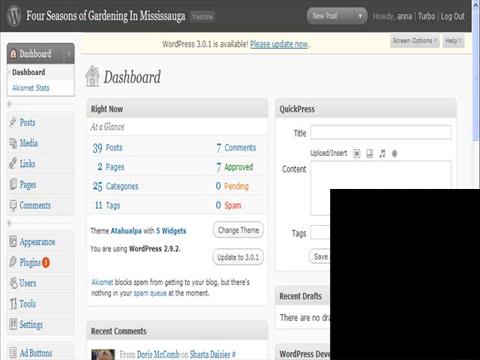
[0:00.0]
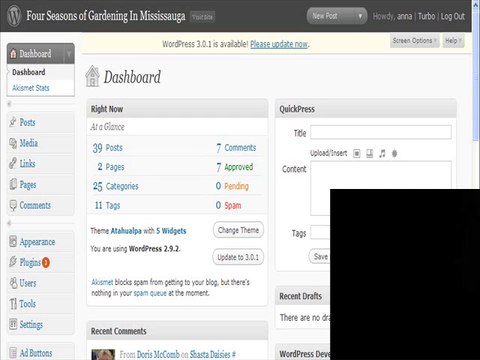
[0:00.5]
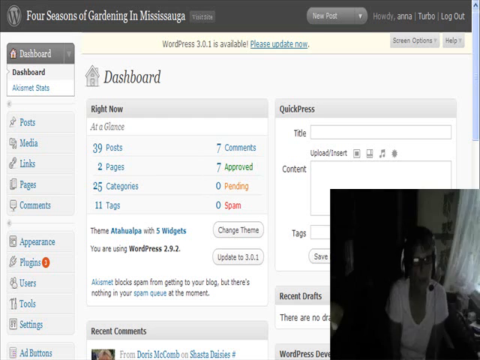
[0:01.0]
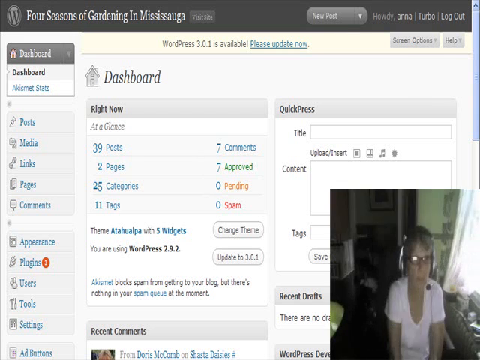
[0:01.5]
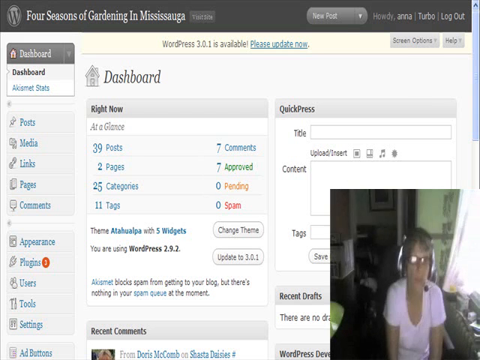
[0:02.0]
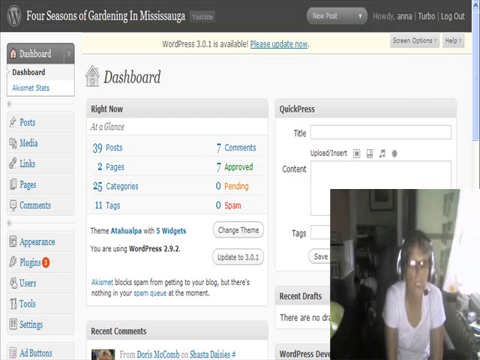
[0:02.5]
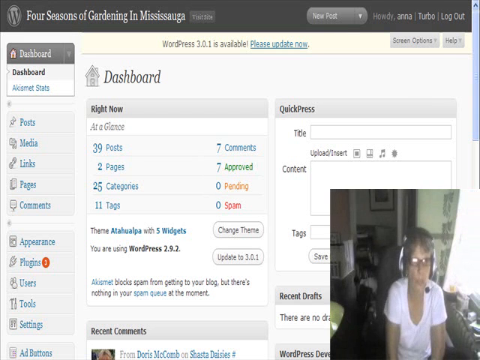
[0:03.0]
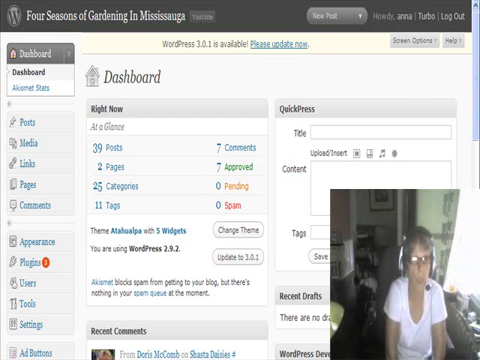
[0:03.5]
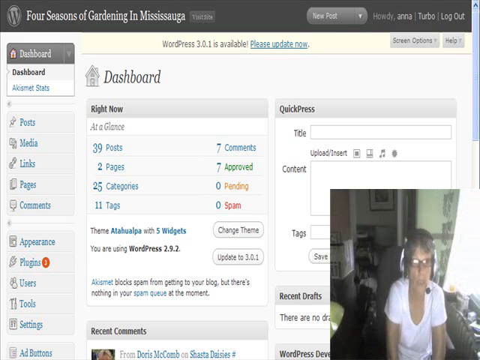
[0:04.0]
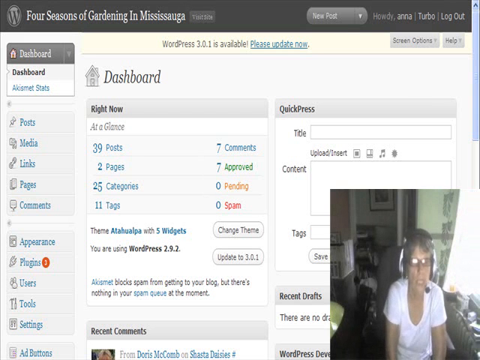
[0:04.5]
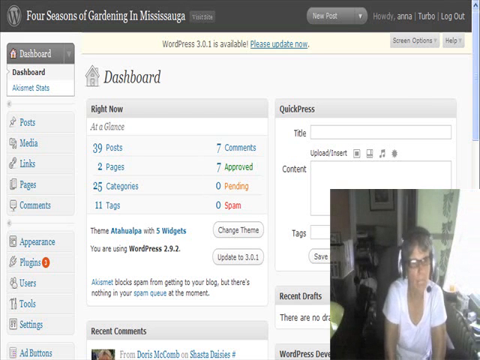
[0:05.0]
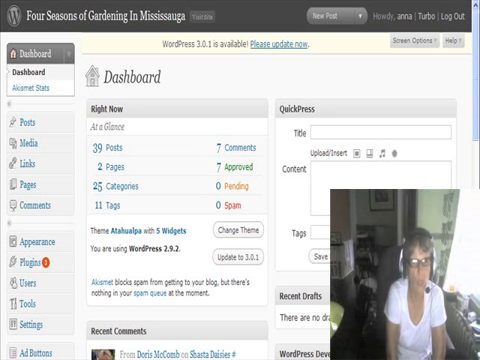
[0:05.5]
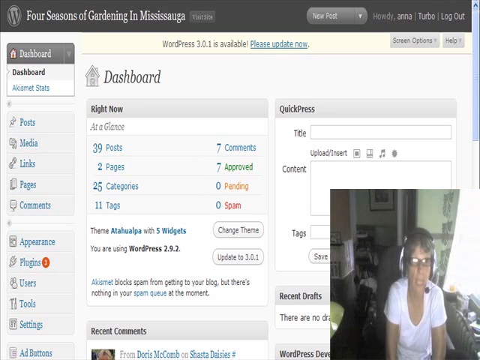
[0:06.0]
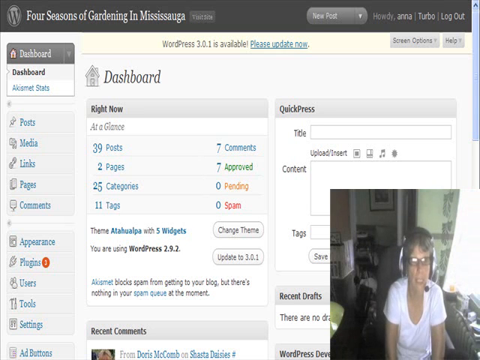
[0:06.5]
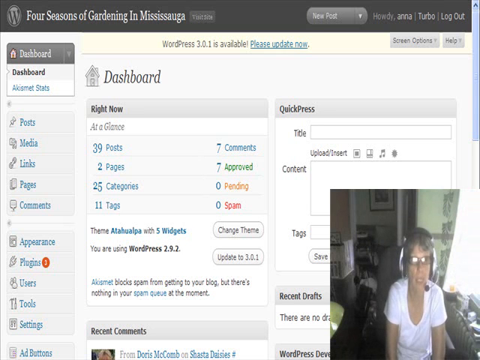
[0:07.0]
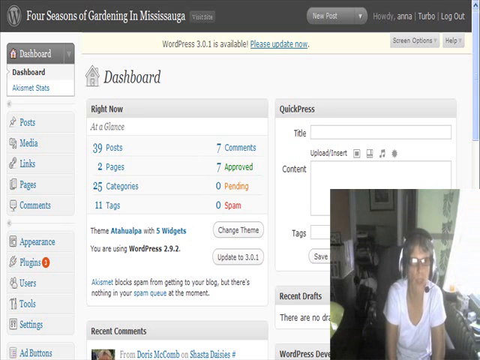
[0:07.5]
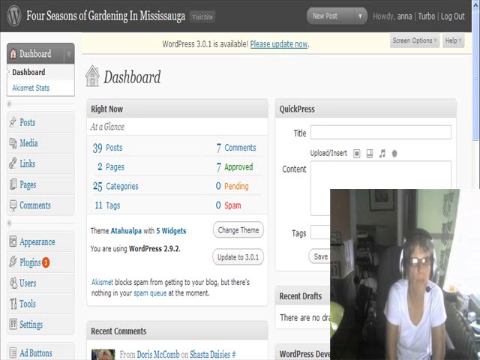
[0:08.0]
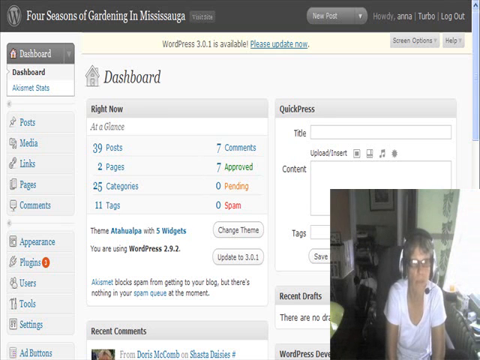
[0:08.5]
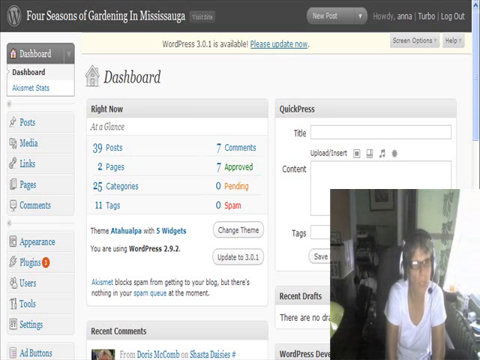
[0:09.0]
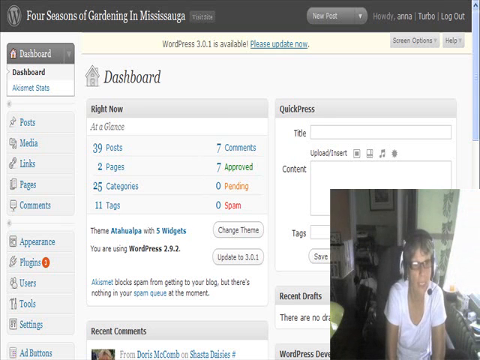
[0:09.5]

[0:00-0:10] This appears to be some sort of instructional or informative video. A dark gray border runs across the top of the screen, with white lettering that reads "Four Seasons of Gardening in Mississauga." In front of the title is what appears to be a logo: an oval shape, taller than it is wide, white in the middle with a black W over it. To the right is a small selection button with a white, downward-pointing arrow that says "new post," and next to that are more options, apparently "Turbo" and "Logout"; the rest is unreadable, but all of this writing is white. Below is a screen that starts with "dashboard," preceded by a house logo. A menu is on the left-hand side and a main screen on the right, and the dashboard lists several other items. In the bottom right is a window in which the woman presenting appears. She is probably somewhere around 50 to 60, with short gray hair, glasses, a white t-shirt and white headphones, and she is speaking.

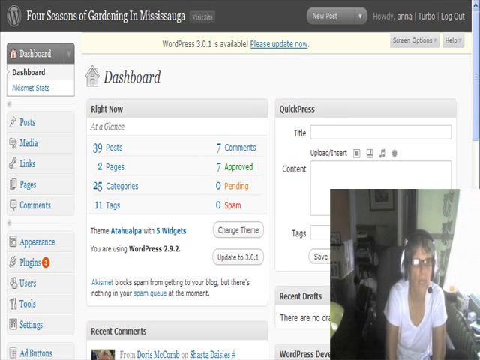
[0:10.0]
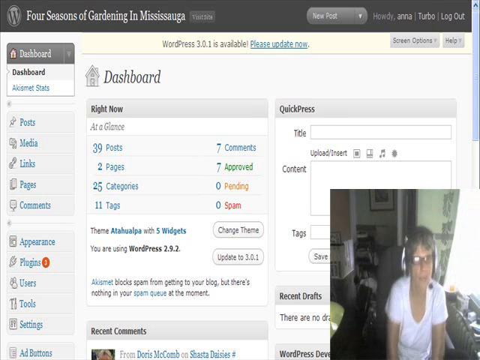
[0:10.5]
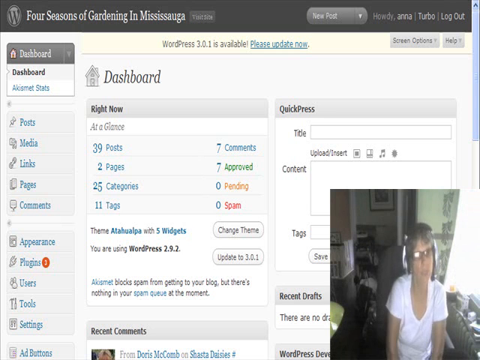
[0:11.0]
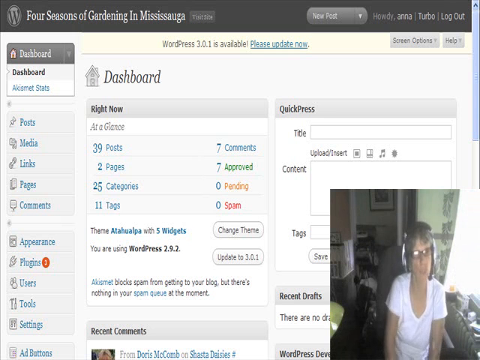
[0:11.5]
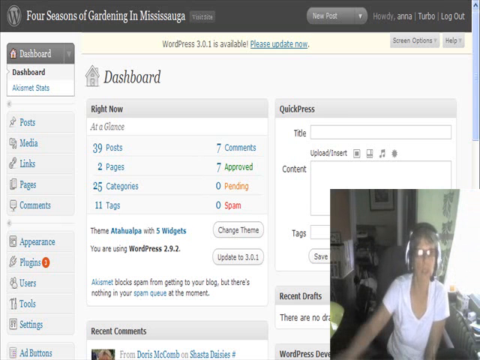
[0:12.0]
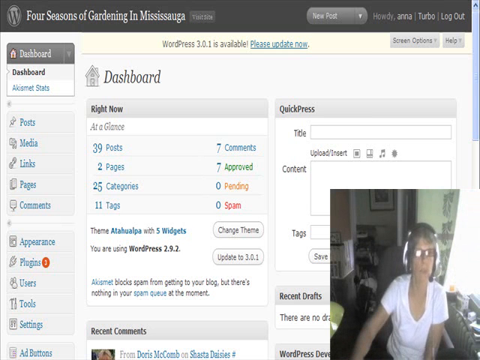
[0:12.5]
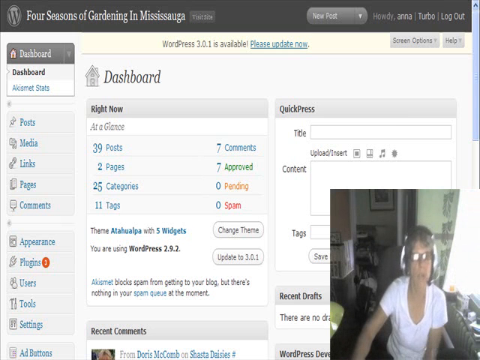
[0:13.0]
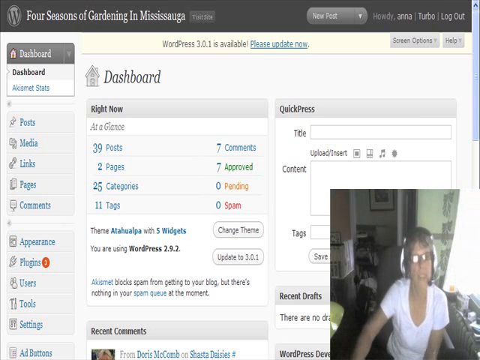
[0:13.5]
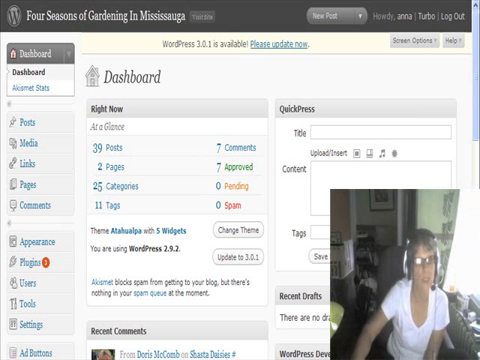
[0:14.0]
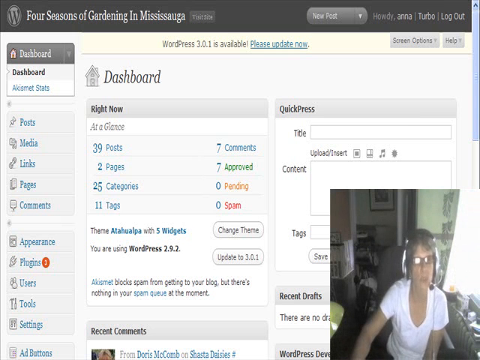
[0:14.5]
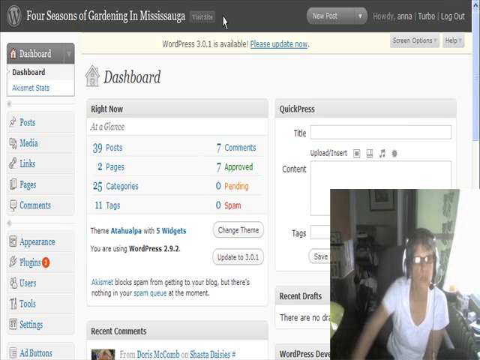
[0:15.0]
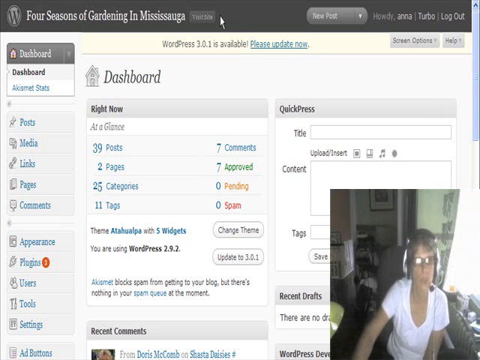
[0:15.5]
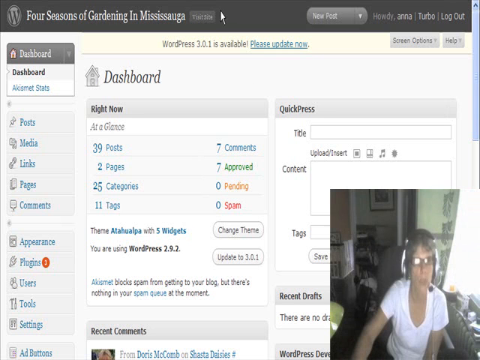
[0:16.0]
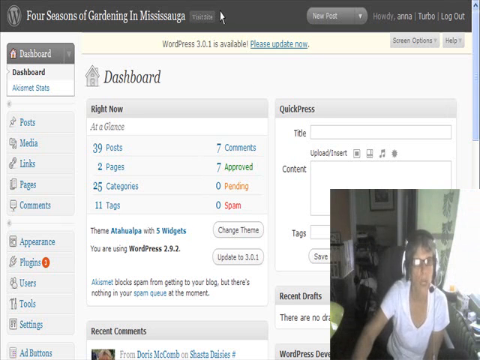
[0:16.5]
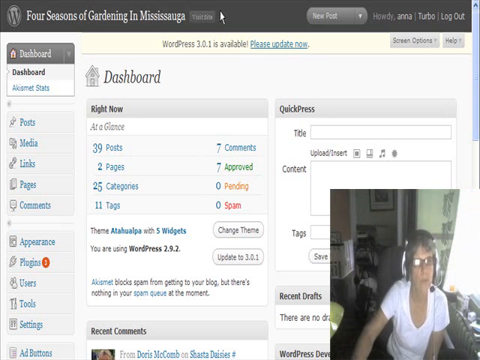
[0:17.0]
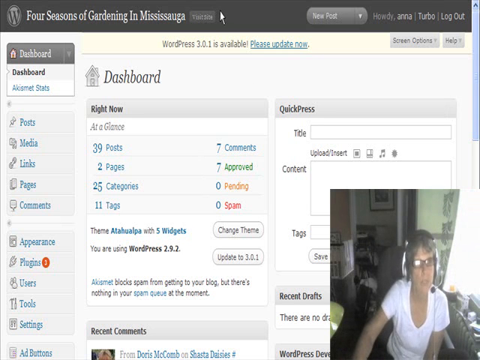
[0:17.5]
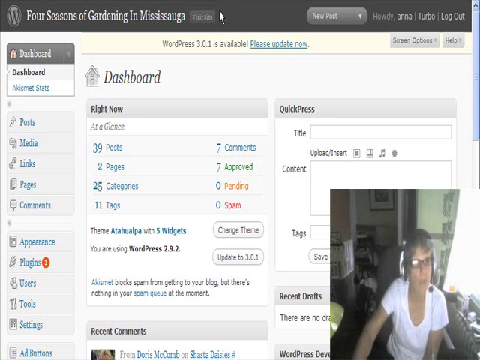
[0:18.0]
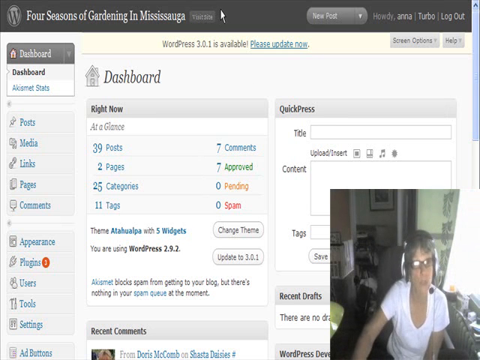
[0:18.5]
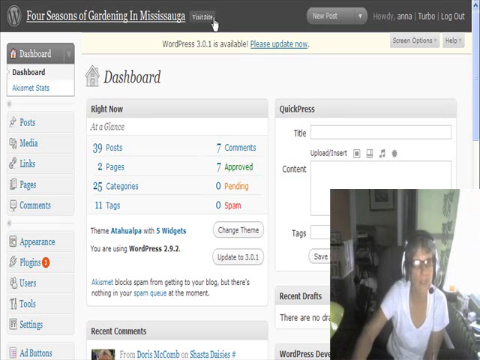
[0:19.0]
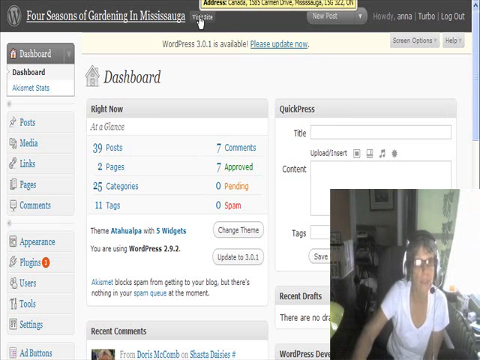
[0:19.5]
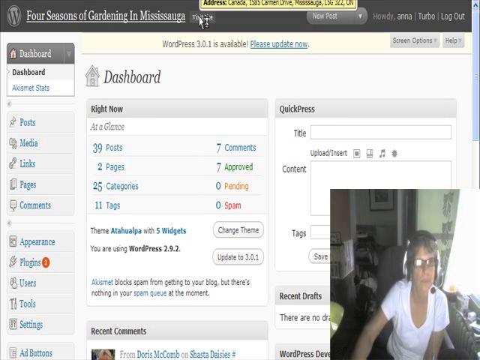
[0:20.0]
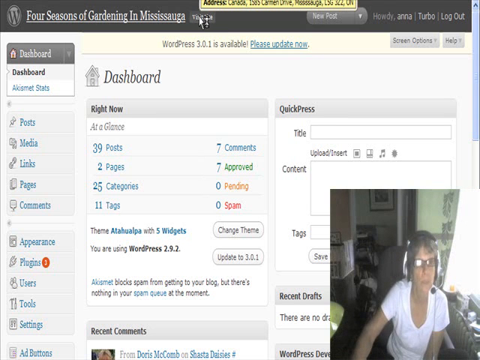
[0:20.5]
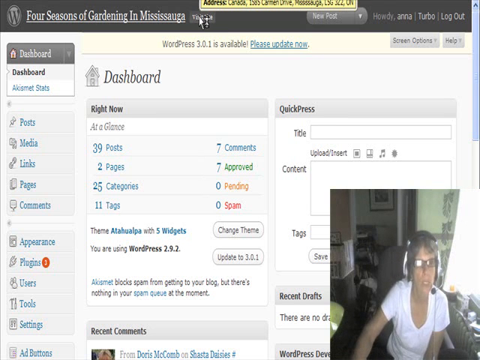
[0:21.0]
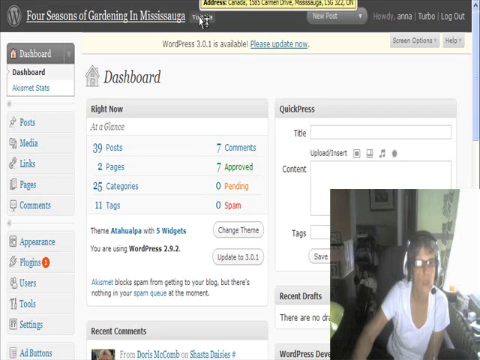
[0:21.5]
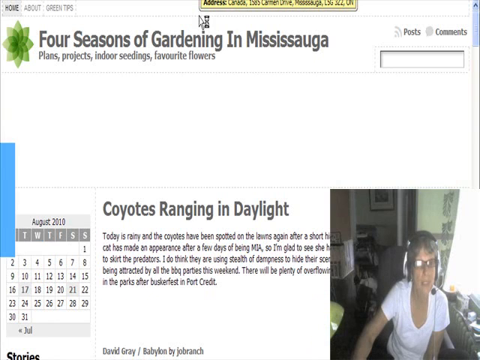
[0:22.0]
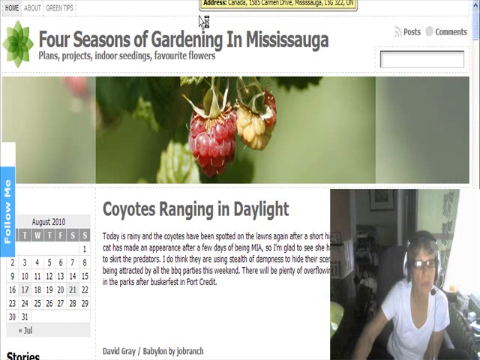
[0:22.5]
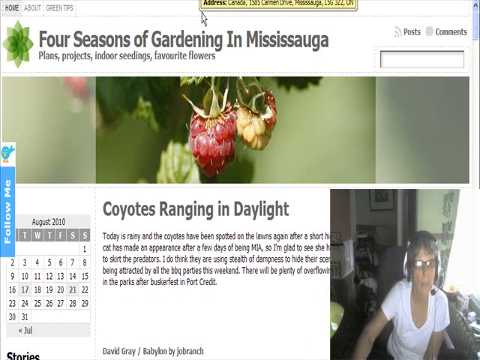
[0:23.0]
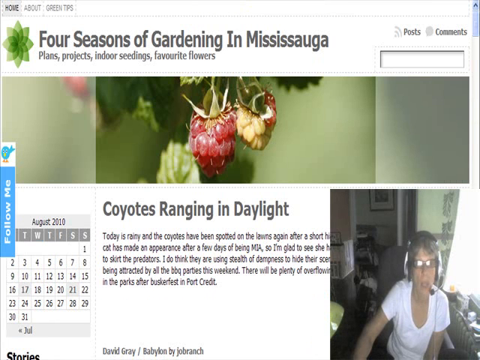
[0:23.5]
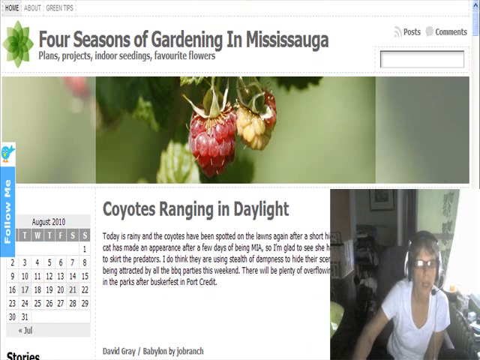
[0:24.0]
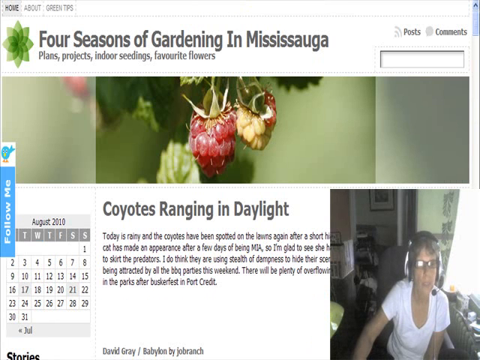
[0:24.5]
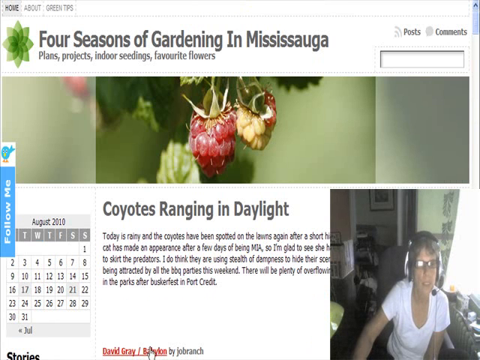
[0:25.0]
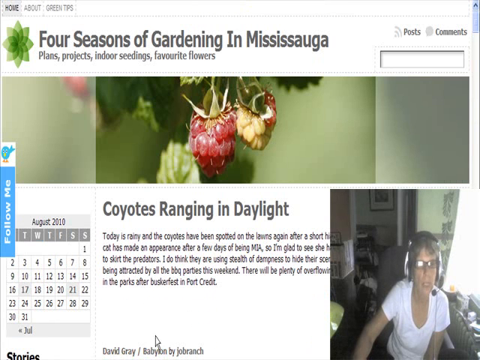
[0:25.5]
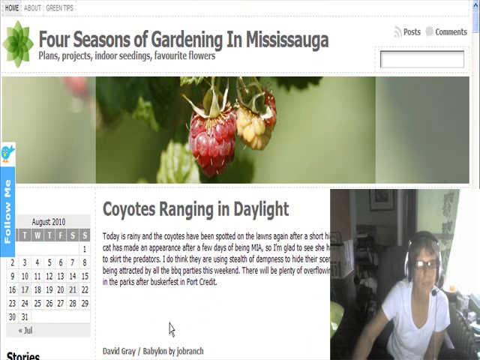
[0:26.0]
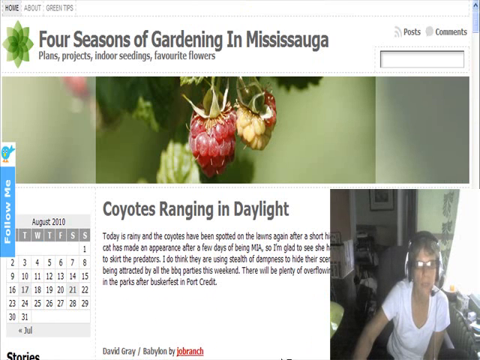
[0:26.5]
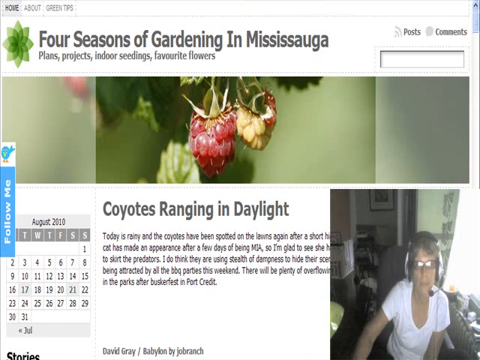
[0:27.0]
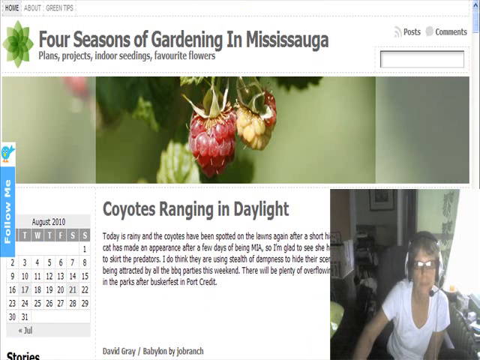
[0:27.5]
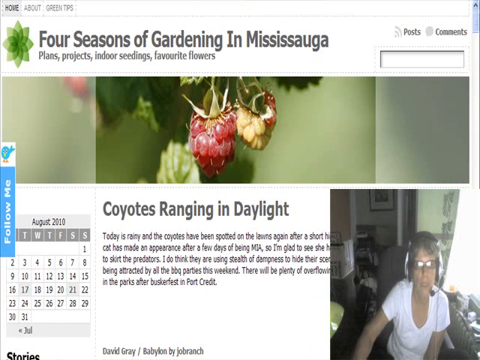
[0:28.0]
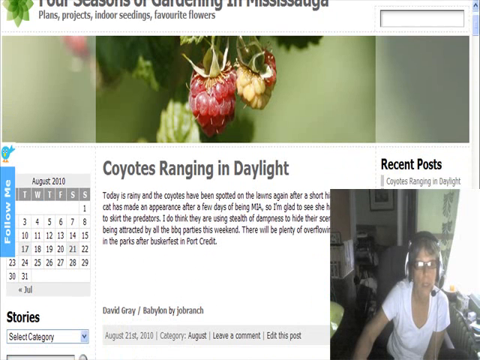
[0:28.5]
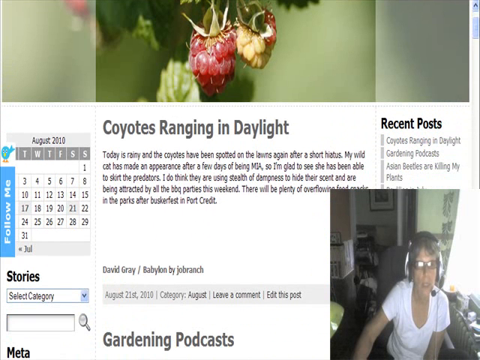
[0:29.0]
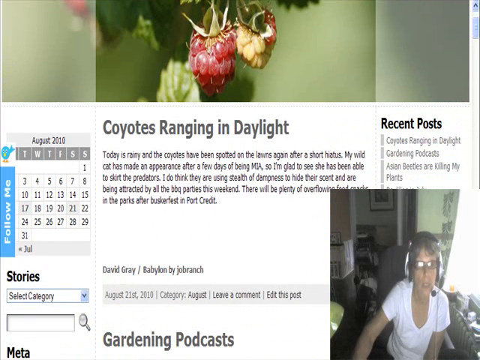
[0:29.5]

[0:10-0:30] The woman speaks, moving her head slightly from left to right. Her right arm reaches out, presumably toward a mouse; the mouse is not visible because she is only shown from the waist up, but her elbow moves out from the right side of her body. At the same time, the mouse arrow on screen points at the top next to "Four Seasons of Gardening in Mississauga," hovering over a small button there whose label is unreadable. A yellow opaque box with unreadable black lettering appears. The screen then switches to an image of what looks like raspberries growing, taking up maybe a quarter of the screen, and beneath it the text reads "coyotes ranging in daylight." The woman moves her head slightly to her right as she talks.